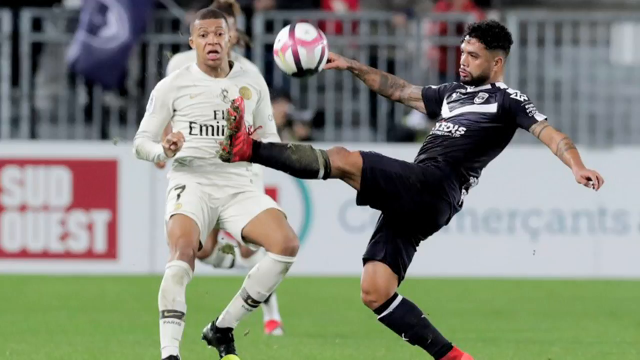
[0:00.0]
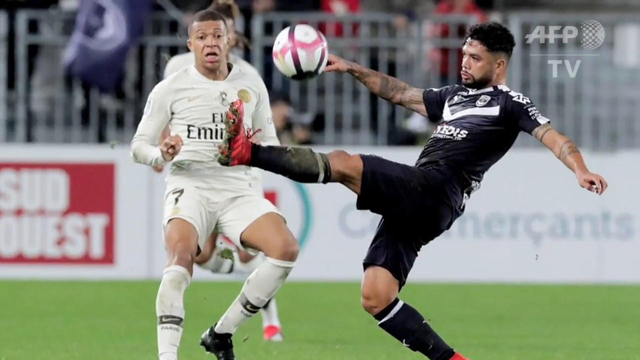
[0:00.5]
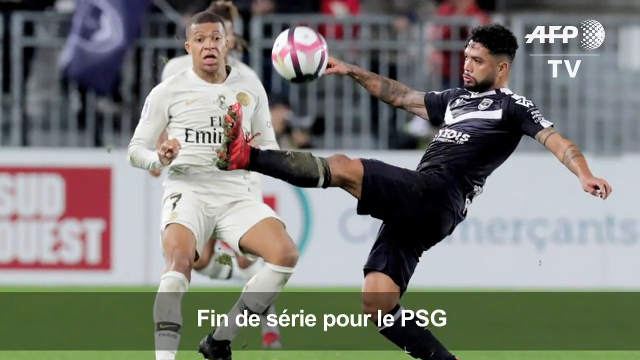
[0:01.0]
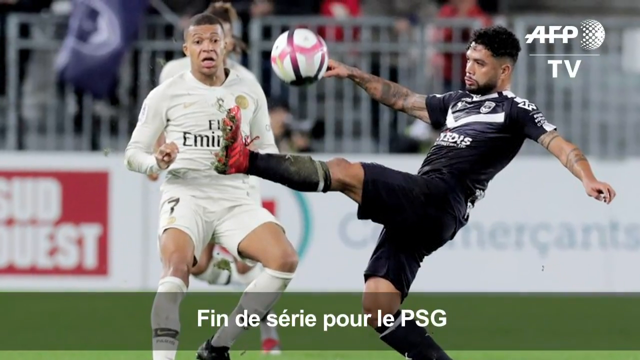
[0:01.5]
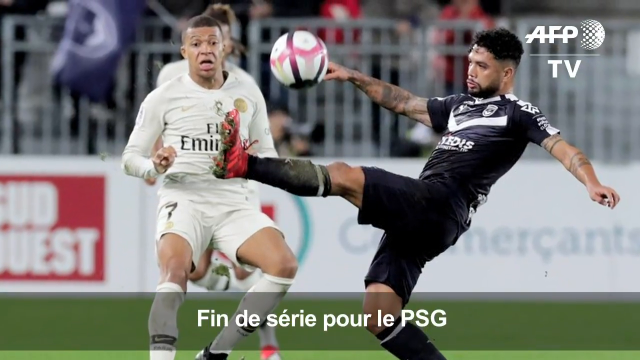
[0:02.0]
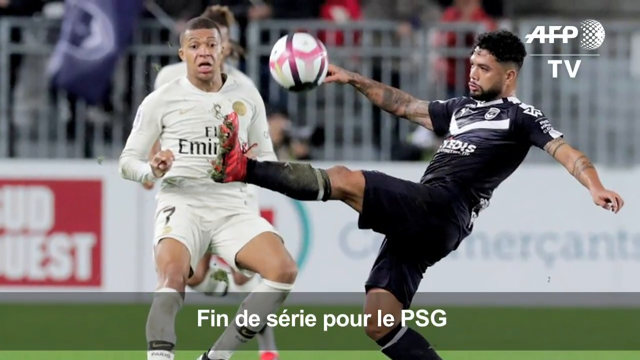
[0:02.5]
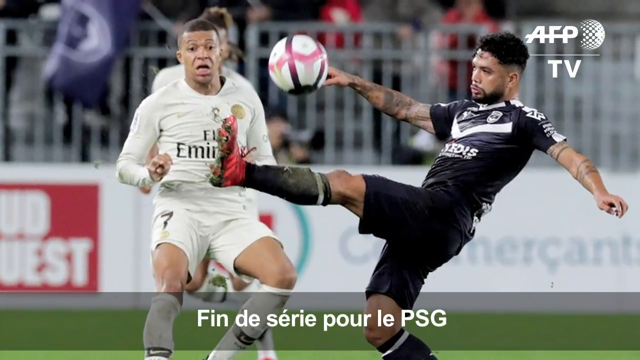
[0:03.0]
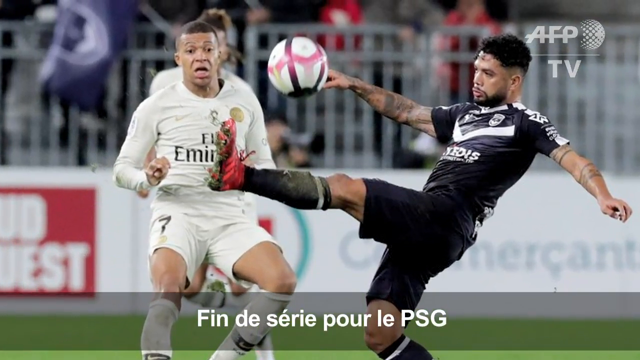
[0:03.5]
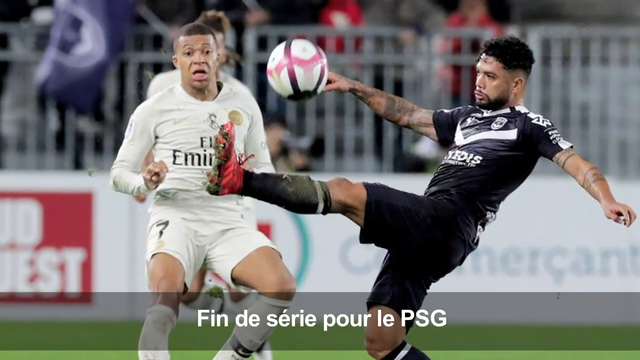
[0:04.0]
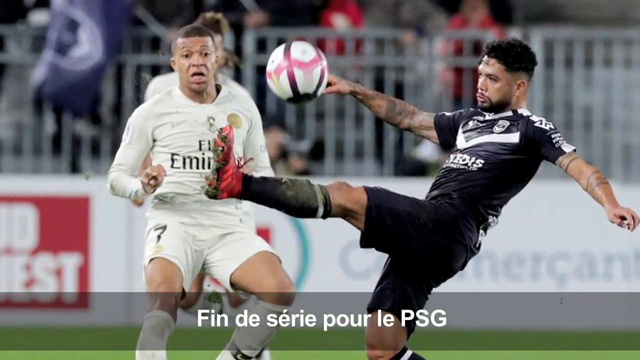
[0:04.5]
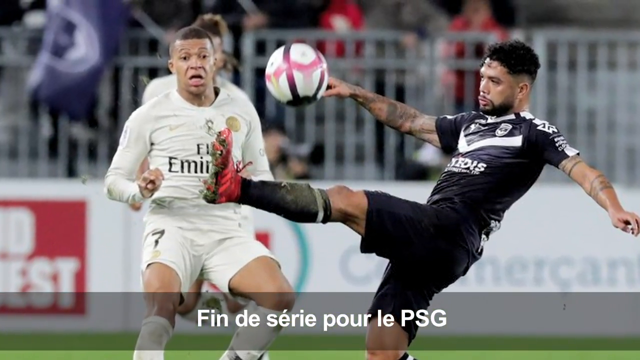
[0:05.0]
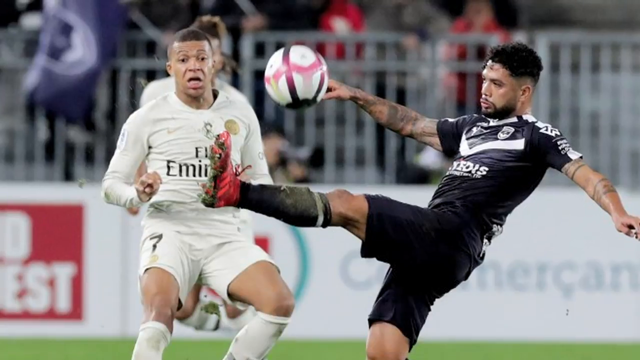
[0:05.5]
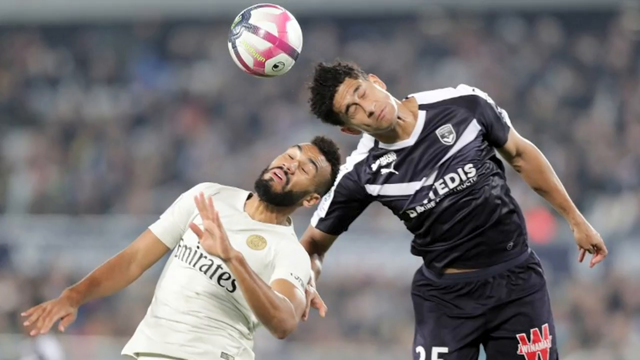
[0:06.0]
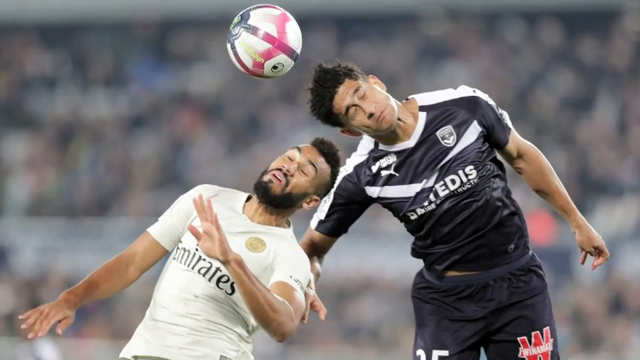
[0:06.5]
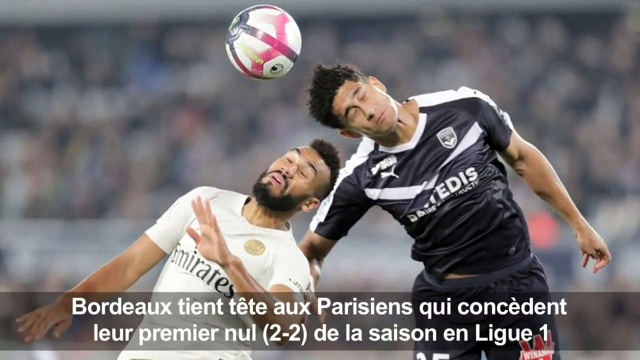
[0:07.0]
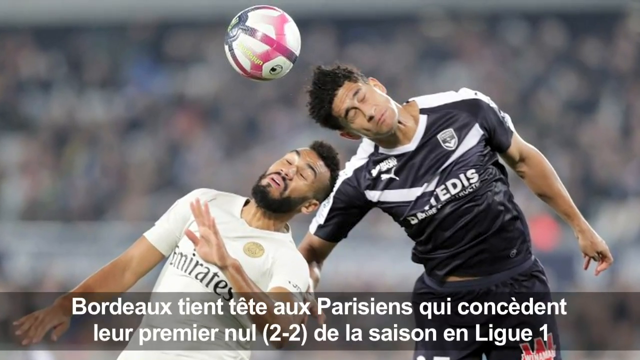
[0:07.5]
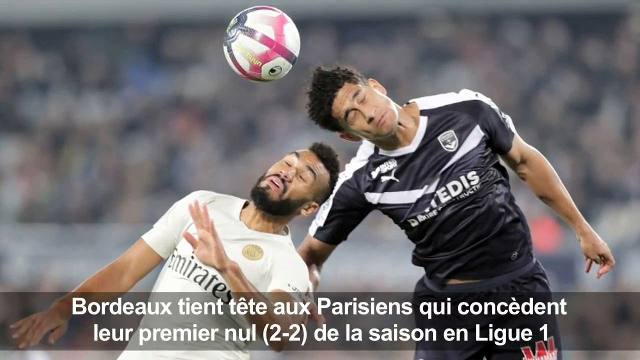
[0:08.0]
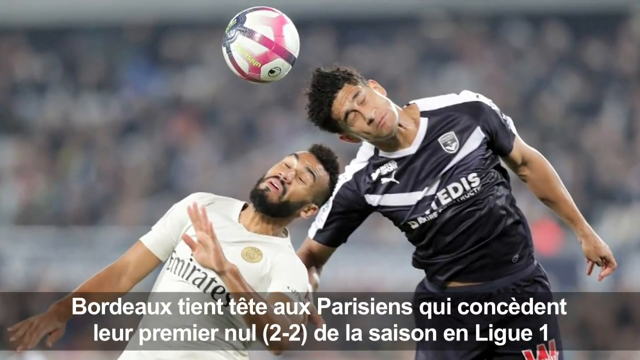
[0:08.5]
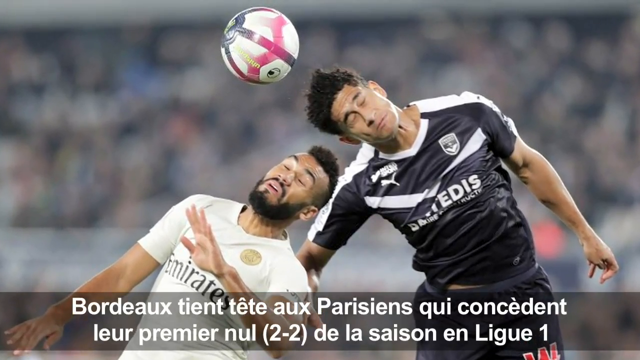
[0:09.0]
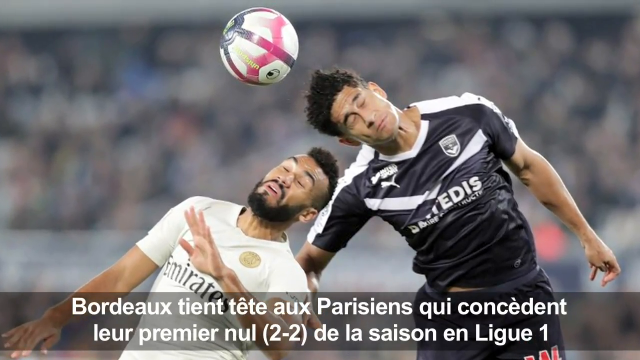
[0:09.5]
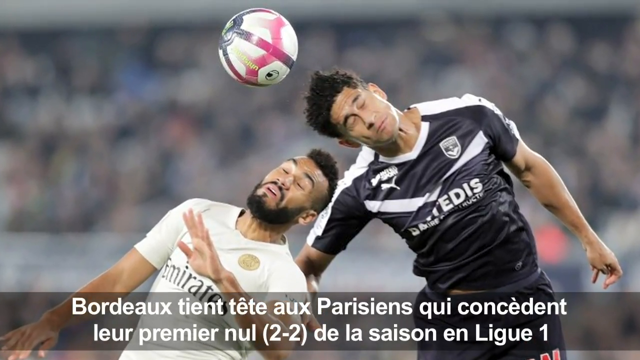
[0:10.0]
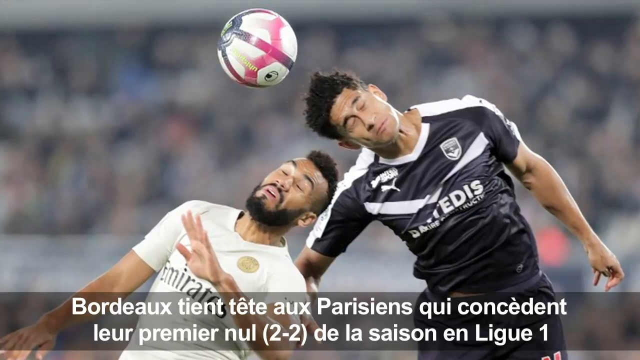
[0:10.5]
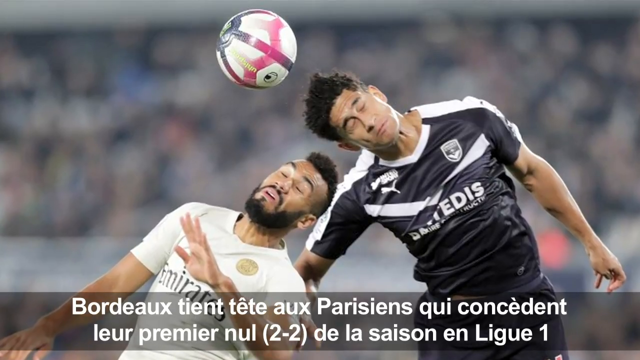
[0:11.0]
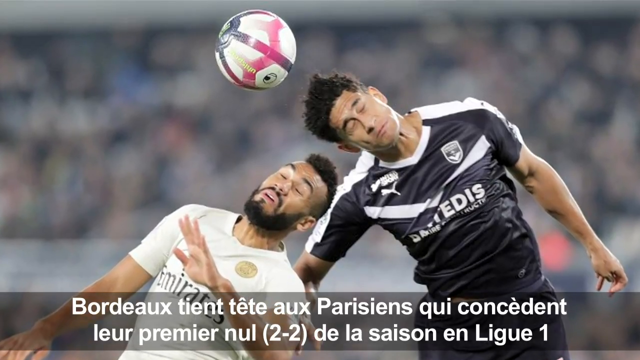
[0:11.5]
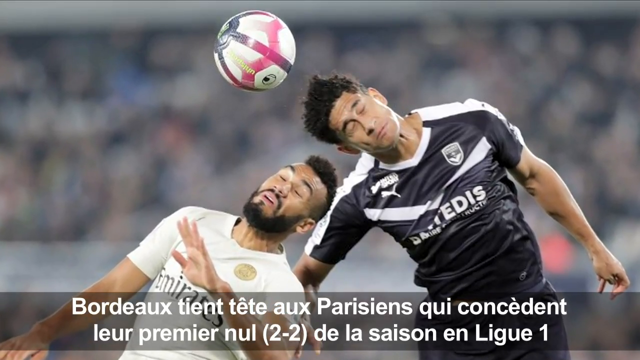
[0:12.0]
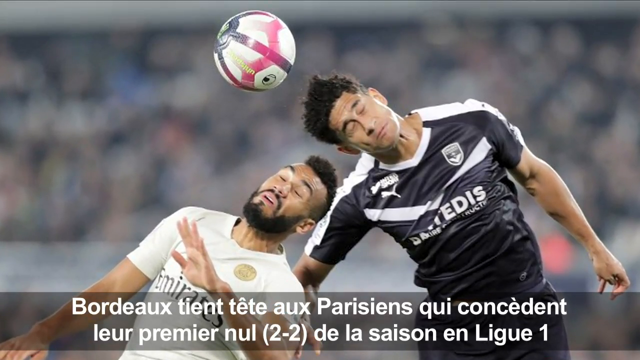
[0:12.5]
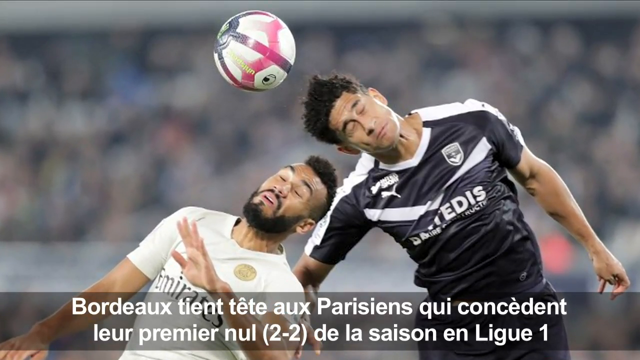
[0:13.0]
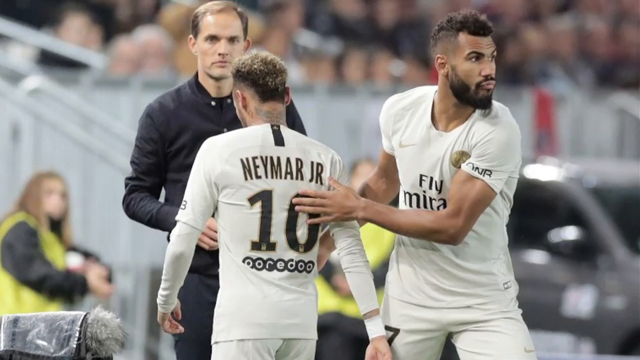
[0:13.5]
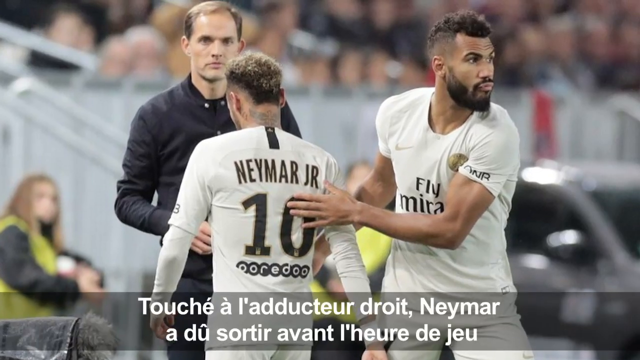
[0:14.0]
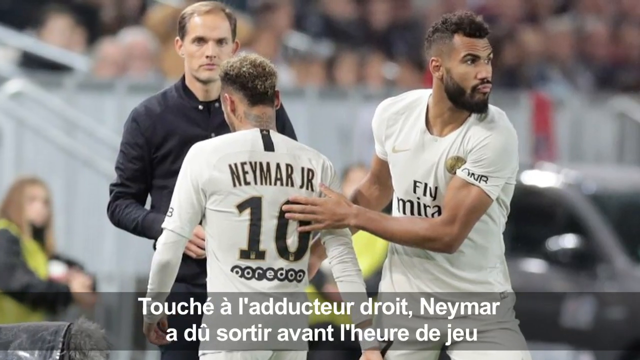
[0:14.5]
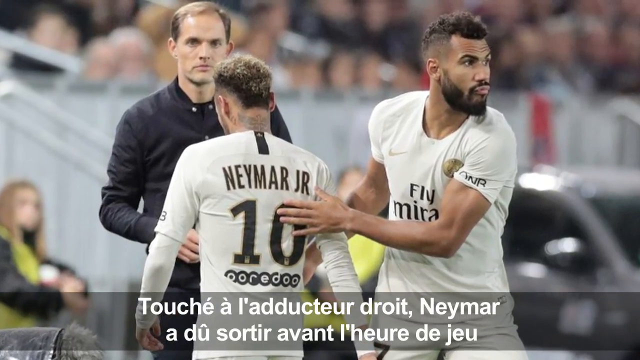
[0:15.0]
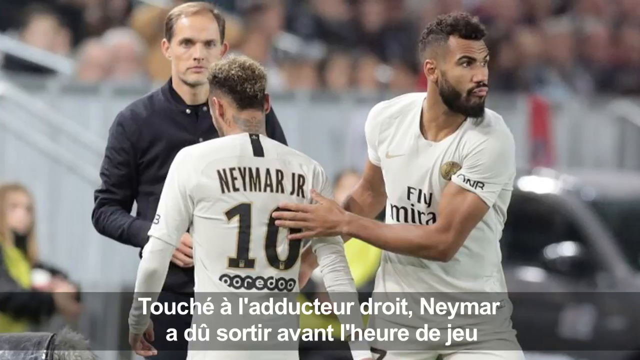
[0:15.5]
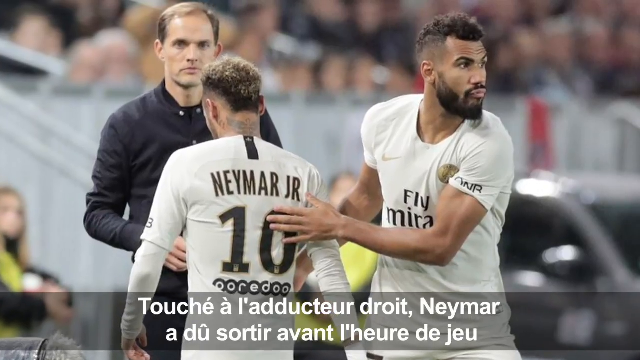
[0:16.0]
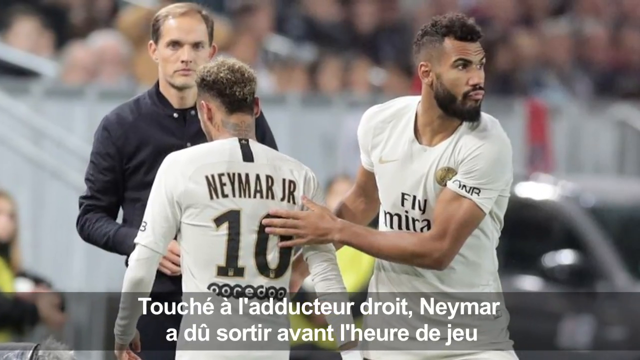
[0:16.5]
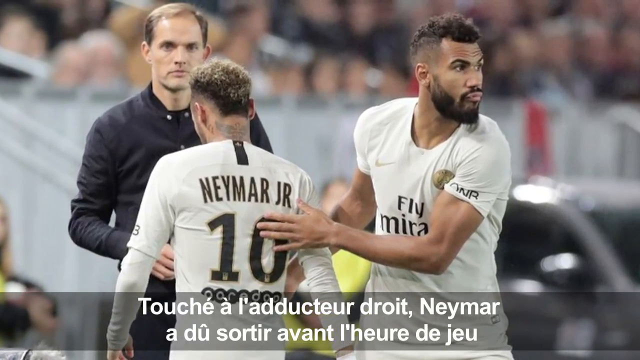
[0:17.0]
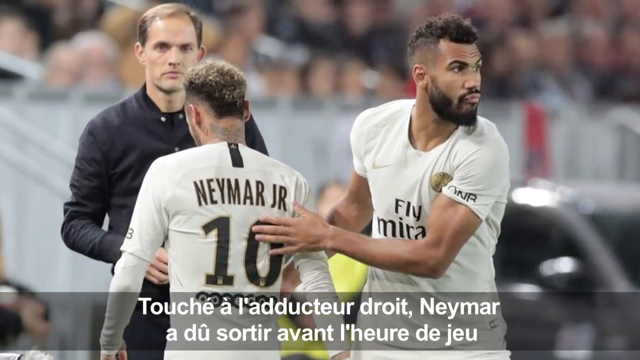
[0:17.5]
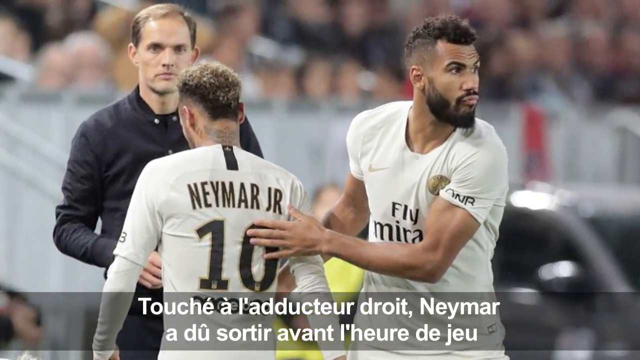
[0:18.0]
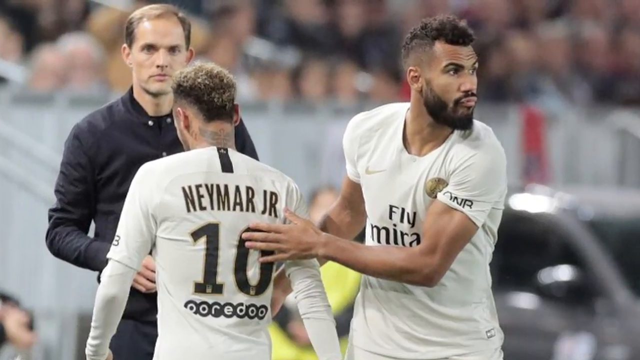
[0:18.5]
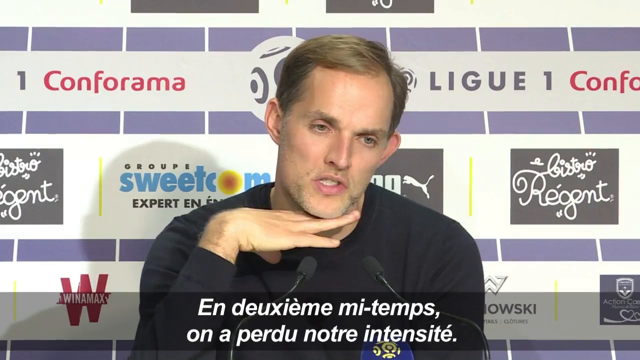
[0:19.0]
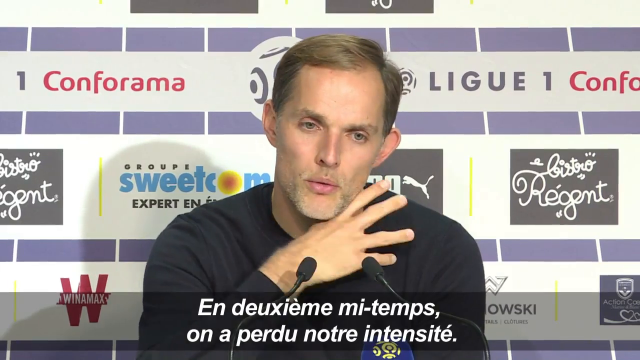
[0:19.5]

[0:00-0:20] The video opens with a picture of a player getting kicked, followed by different shots showing the physicality of the game. A player walks off the field and another player enters it. One team wears white uniforms and the other wears black. The video then cuts to a press conference in which the coach talks, and then to a video interview with the coach, with advertisements behind him. He looks pretty serious and not very humorous, with a bunch of different microphones behind him. Most of the content consists of pictures, mostly shots showing the physicality and aggressiveness of the gameplay, and only a few people appear.